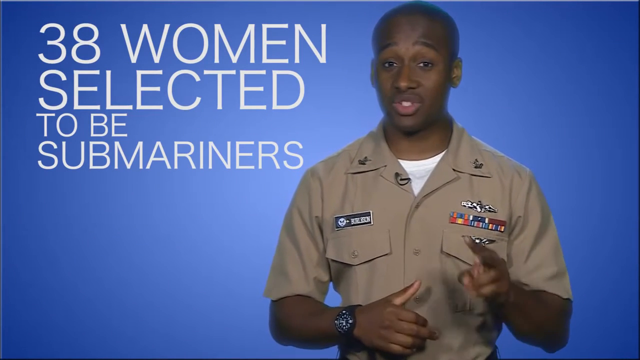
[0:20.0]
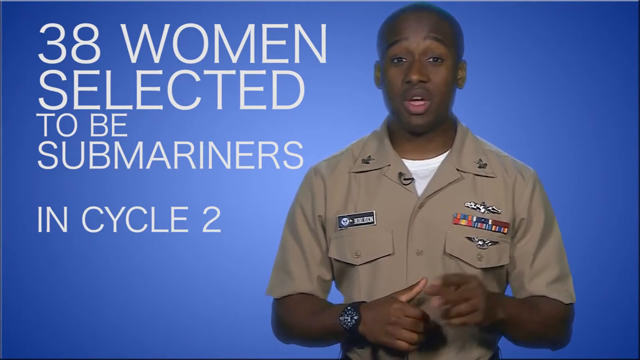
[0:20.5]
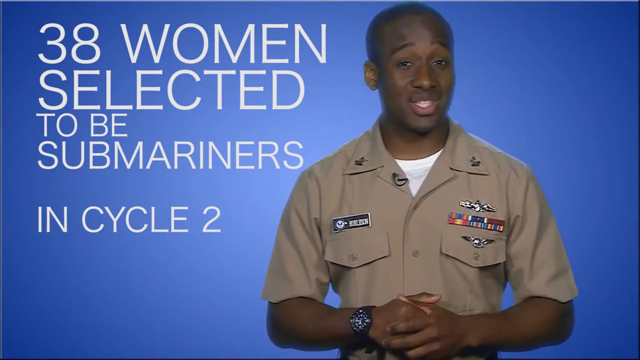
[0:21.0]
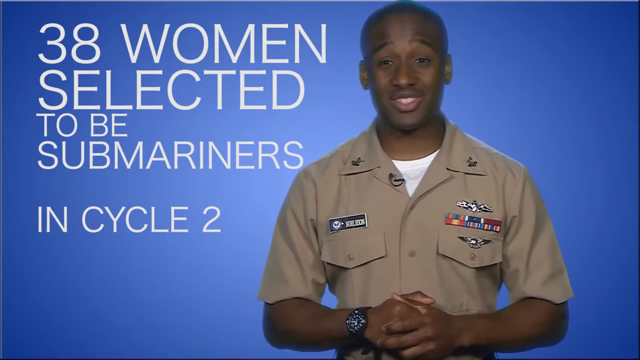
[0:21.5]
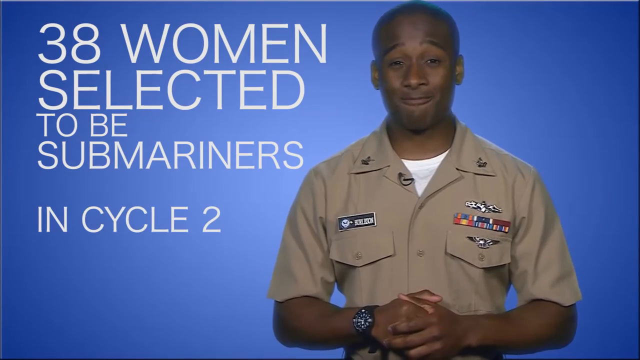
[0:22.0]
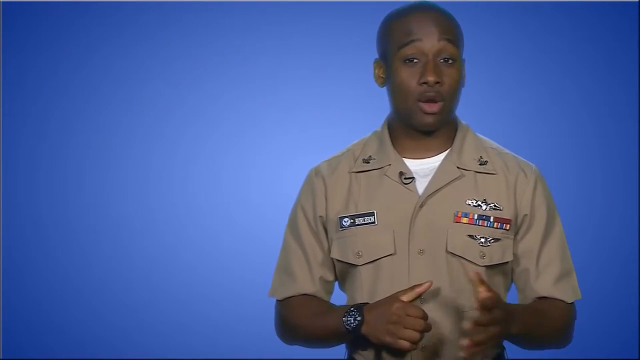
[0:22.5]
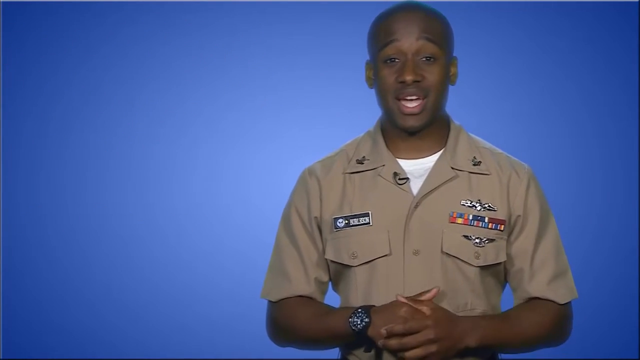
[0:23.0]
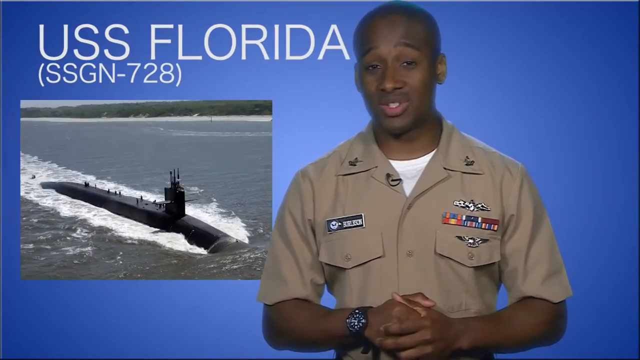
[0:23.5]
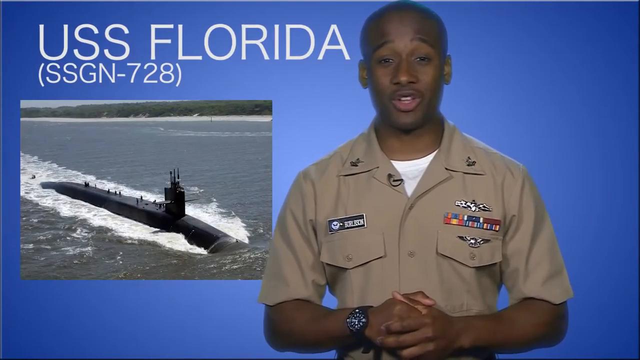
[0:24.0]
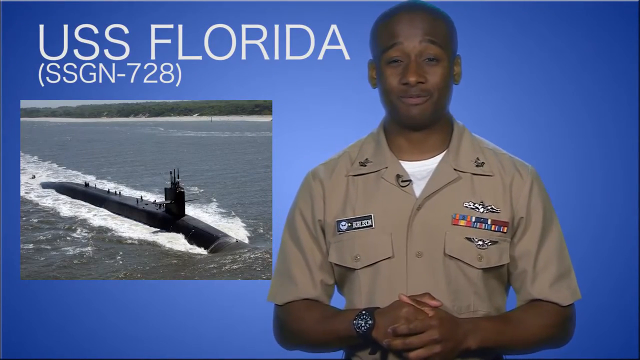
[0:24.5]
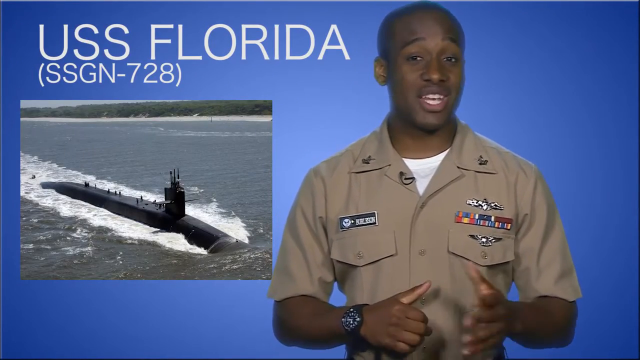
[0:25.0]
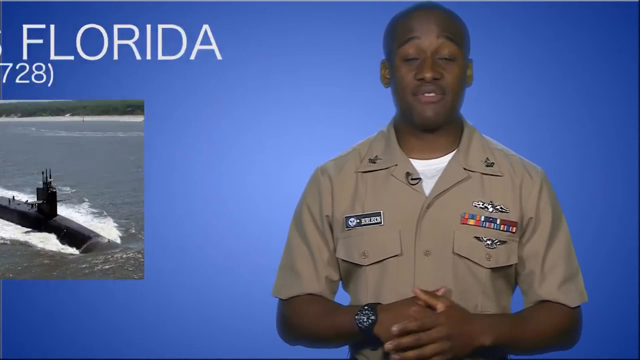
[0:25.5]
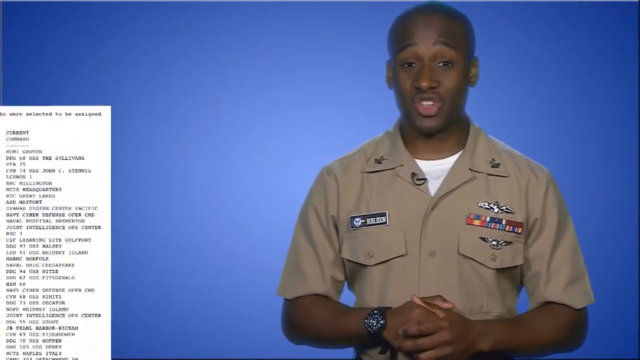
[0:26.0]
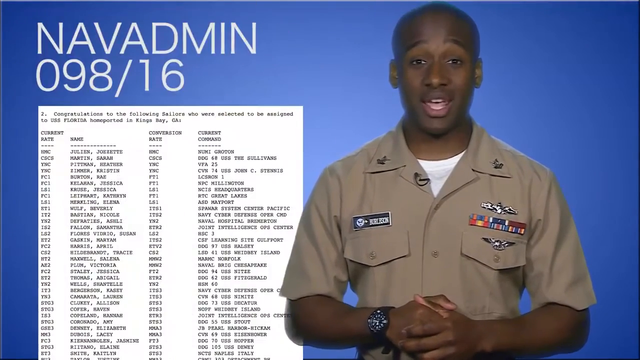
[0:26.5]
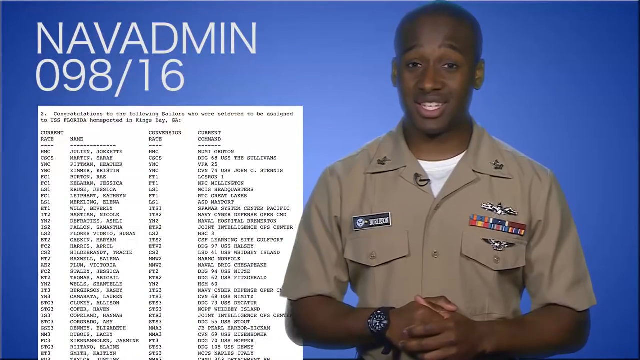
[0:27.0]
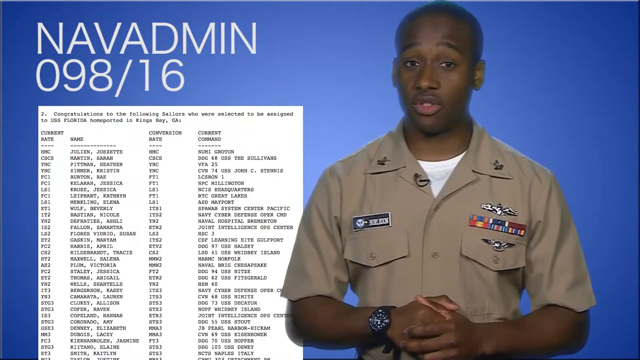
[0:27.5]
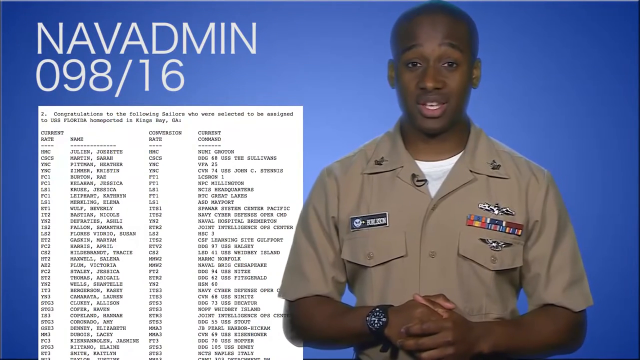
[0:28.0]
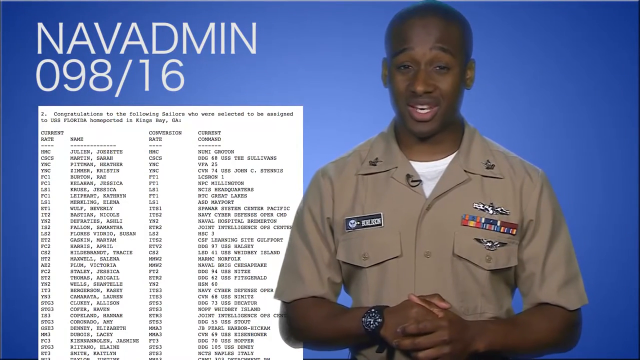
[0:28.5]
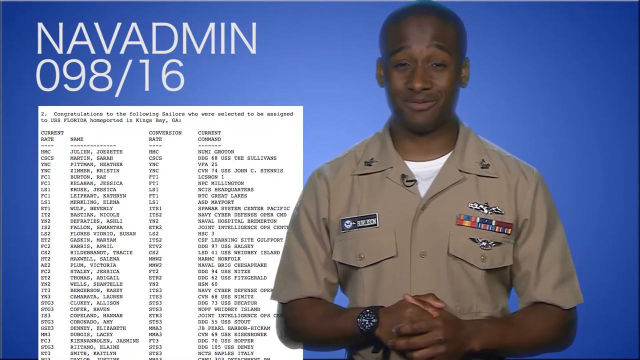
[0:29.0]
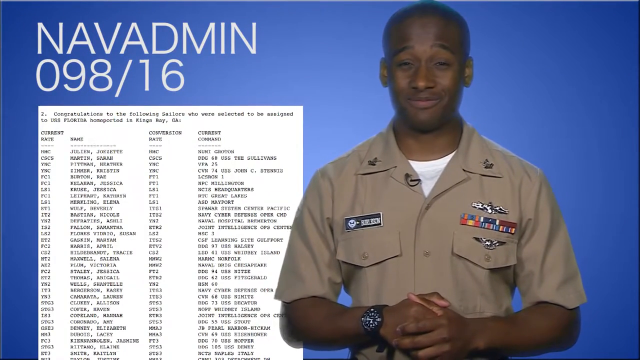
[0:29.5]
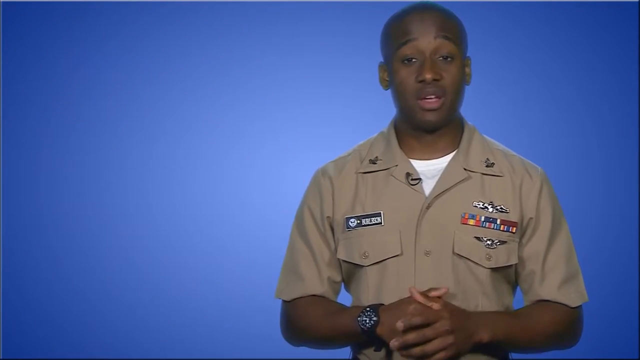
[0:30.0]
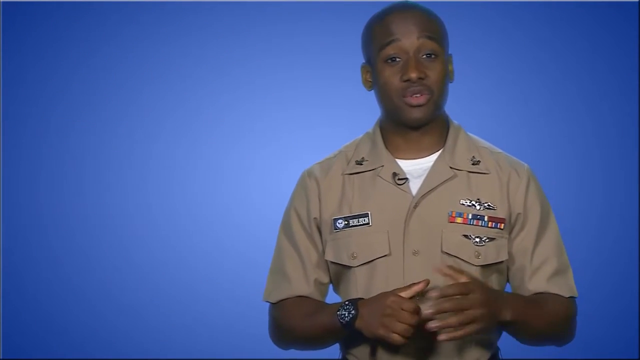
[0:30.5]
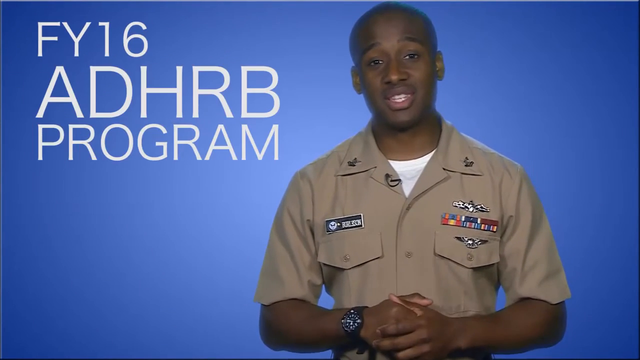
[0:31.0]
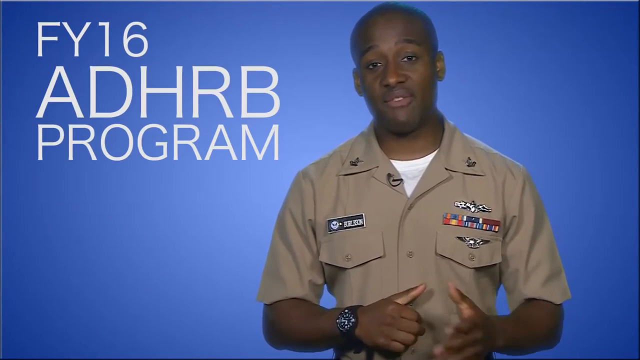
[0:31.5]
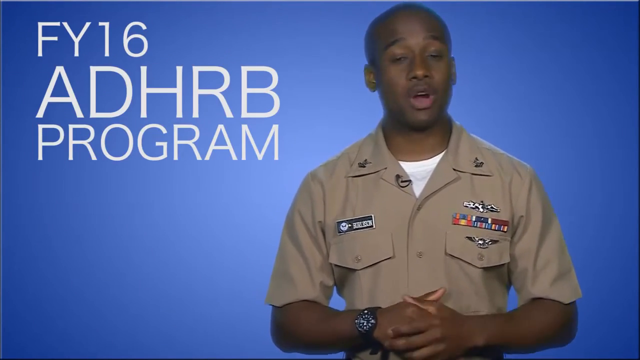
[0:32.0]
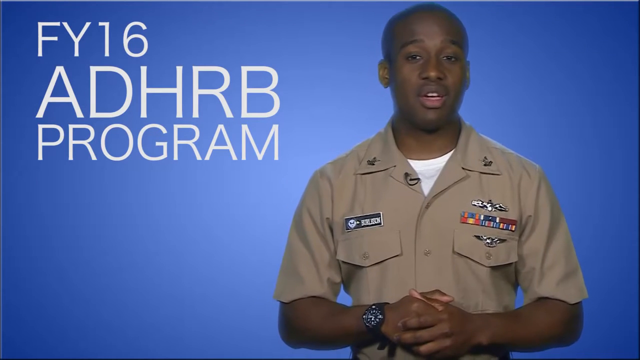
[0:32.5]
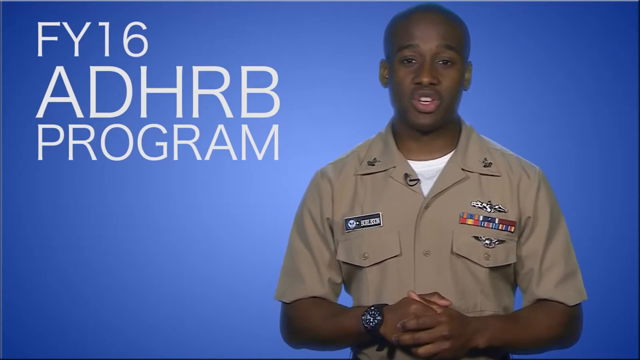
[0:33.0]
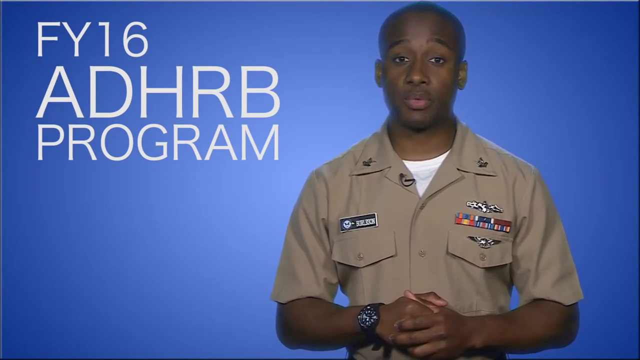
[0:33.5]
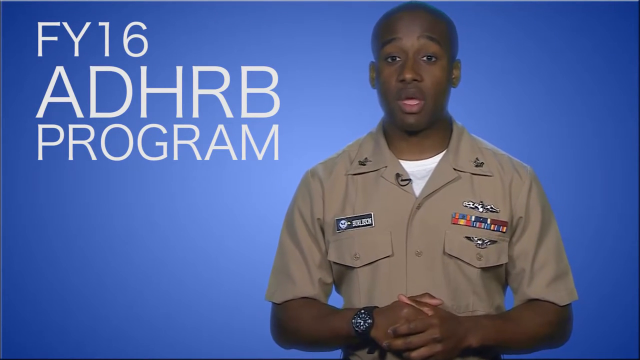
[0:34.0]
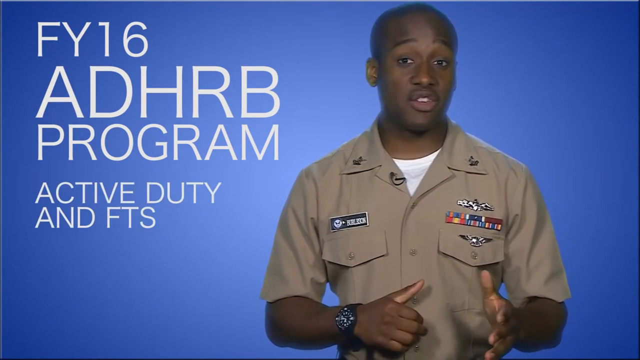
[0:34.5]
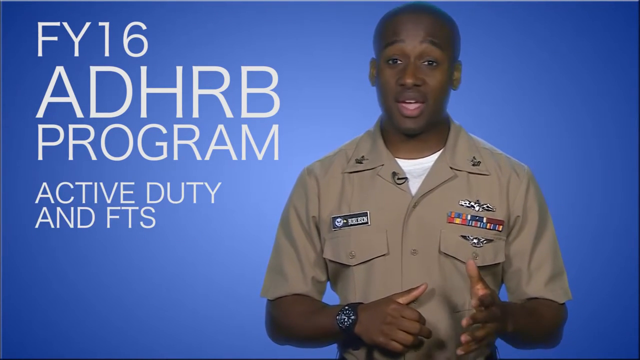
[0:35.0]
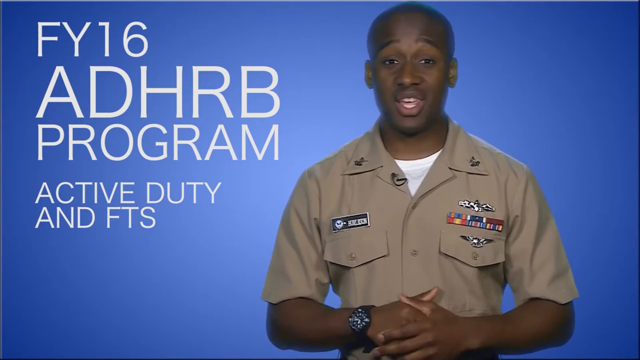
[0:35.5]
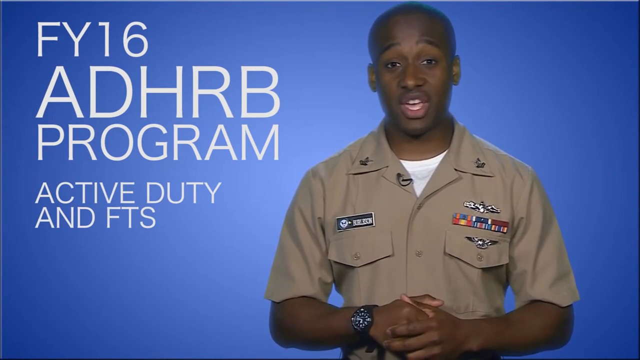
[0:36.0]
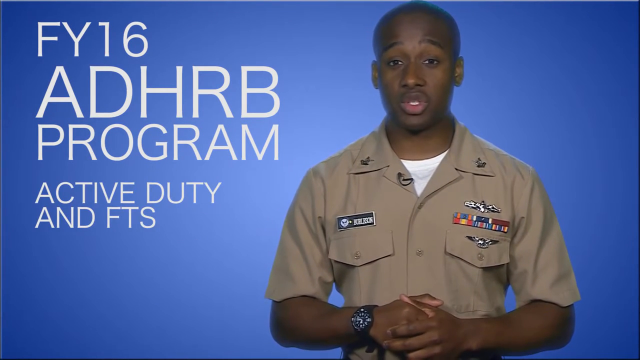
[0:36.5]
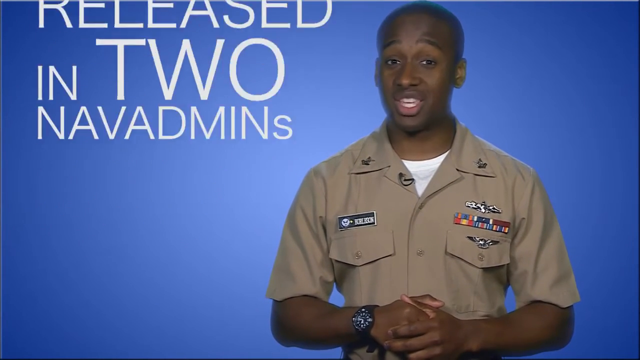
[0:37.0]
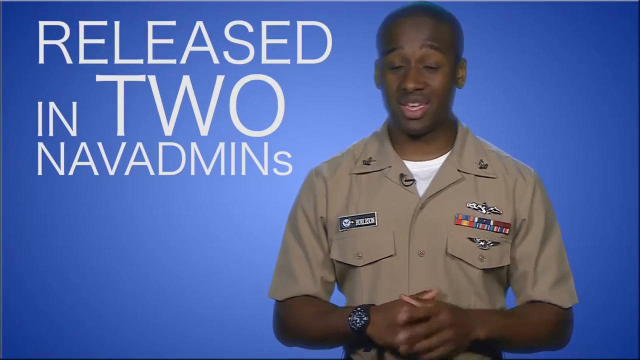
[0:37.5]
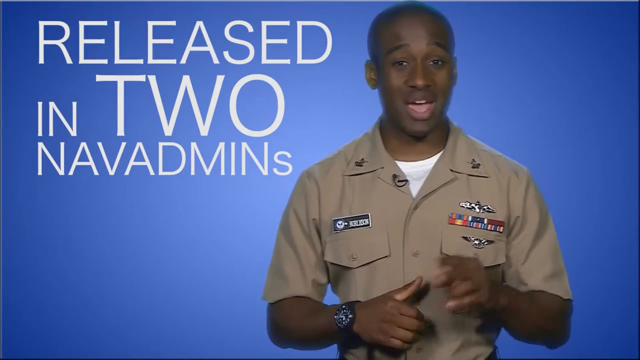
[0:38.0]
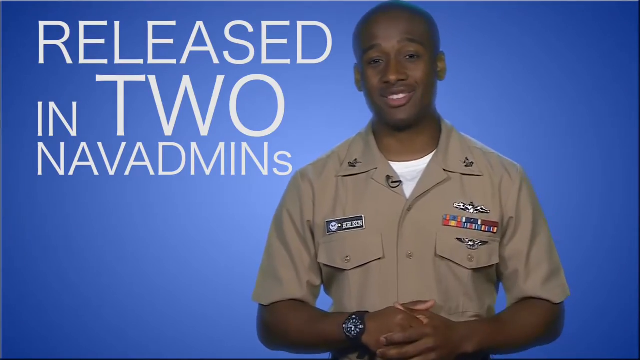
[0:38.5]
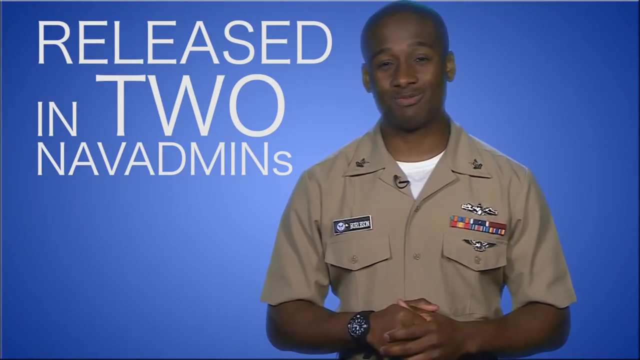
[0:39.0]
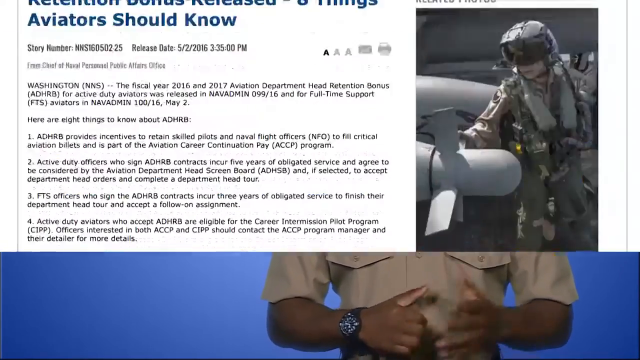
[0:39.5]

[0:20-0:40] Against an ombre blue background that is white and becomes darker blue and black toward the bottom third of the screen, an African American man stands in the center, smiling. He is dressed in military attire: a short-sleeved tan shirt with multiple award braids in various colors over the left pocket, and what appears to be a wingman's pin over the left pocket. He has lapel pins on his collars and wears a detachable microphone with a clip on his right collar. Under the tan shirt he wears a white t-shirt. He talks directly to the camera, using his hands to make gestures. A graphic in white lettering appears on the left side of the screen reading "38 women selected to be submariners in cycle two." As the man continues to talk, letters and graphics appear on the left side reading "USS Florida" with "SSGN-728" in parentheses beneath it. There is also a graphic of a submarine in the ocean, half-submerged.